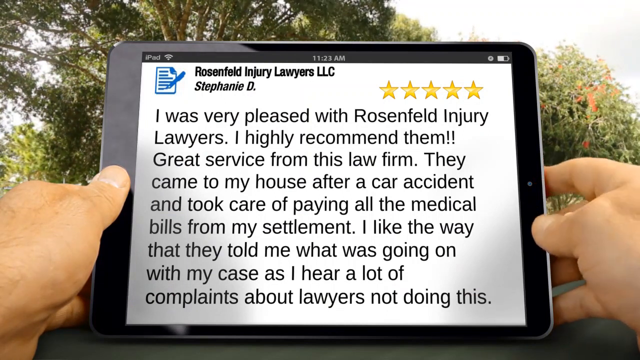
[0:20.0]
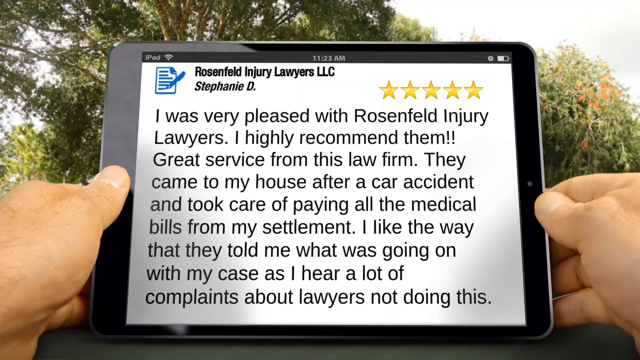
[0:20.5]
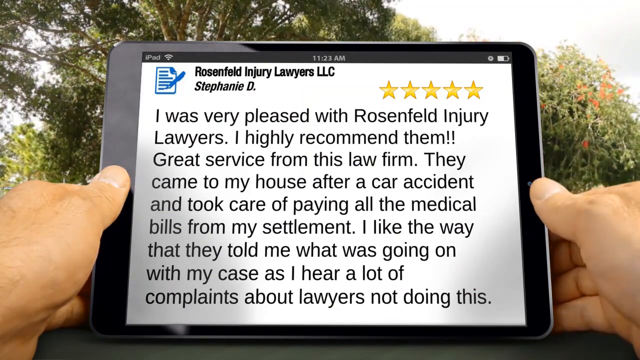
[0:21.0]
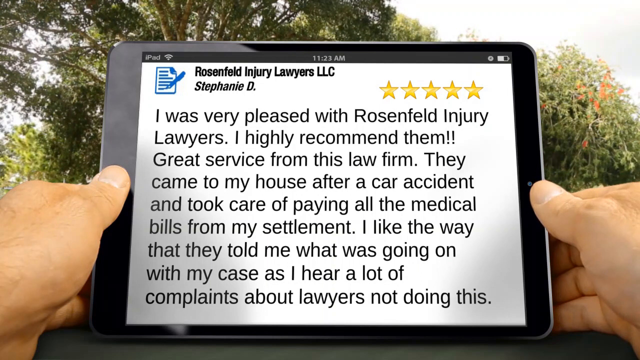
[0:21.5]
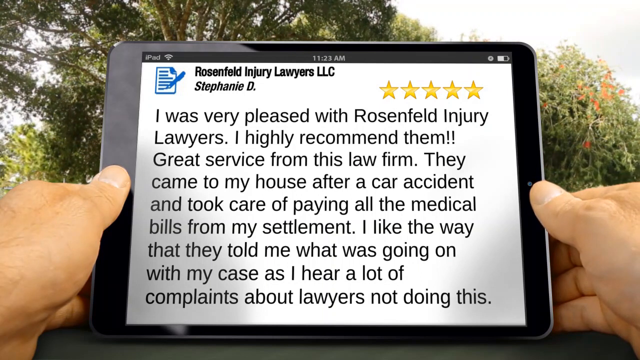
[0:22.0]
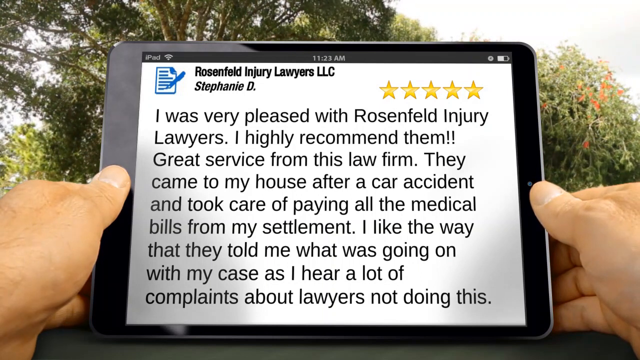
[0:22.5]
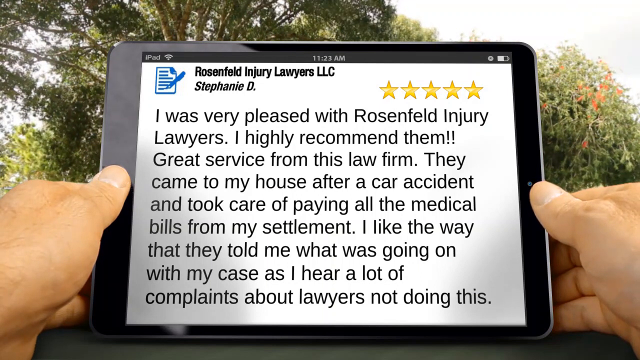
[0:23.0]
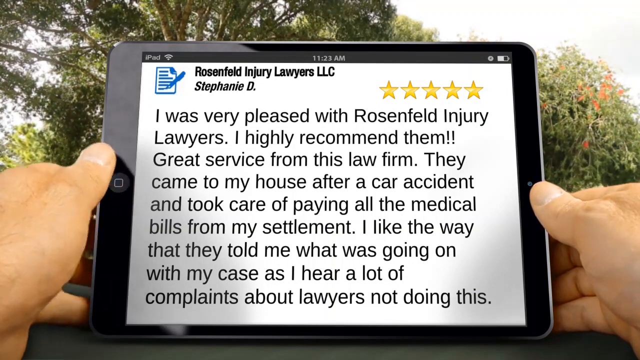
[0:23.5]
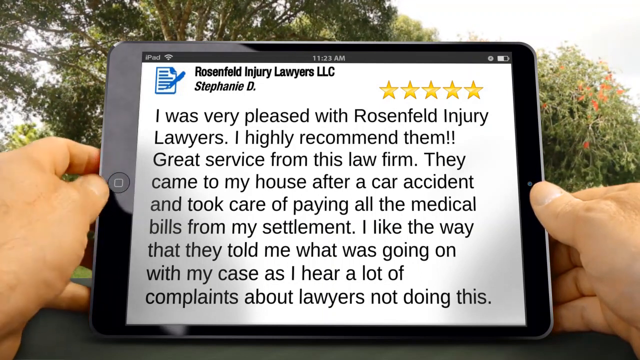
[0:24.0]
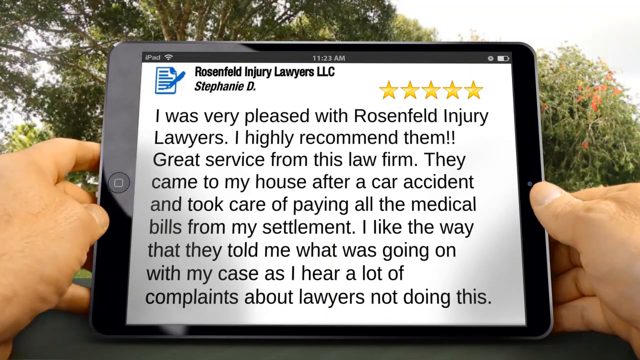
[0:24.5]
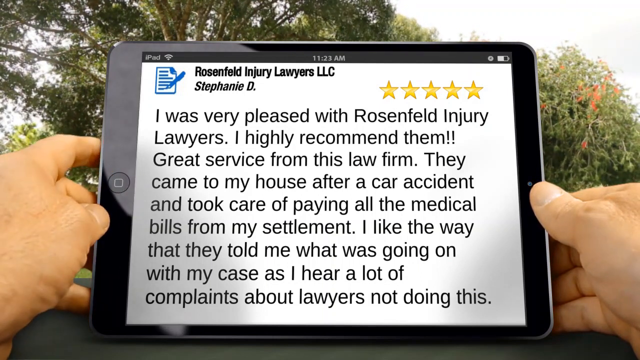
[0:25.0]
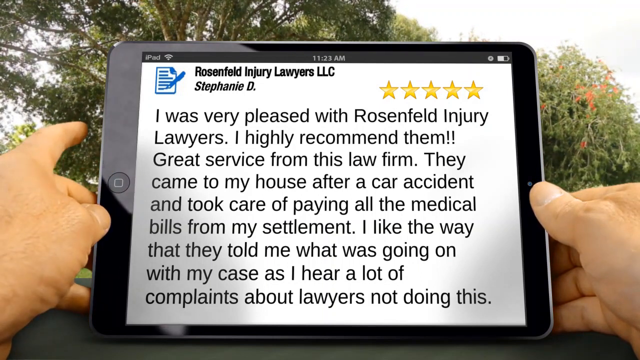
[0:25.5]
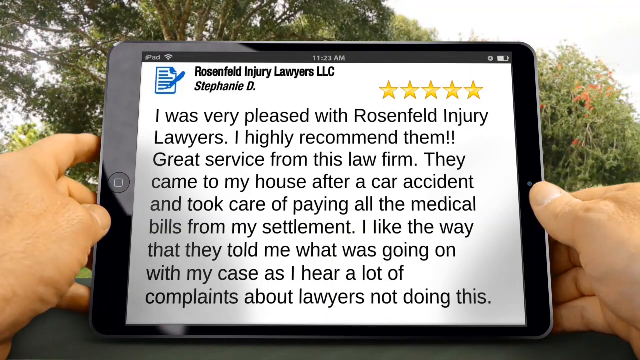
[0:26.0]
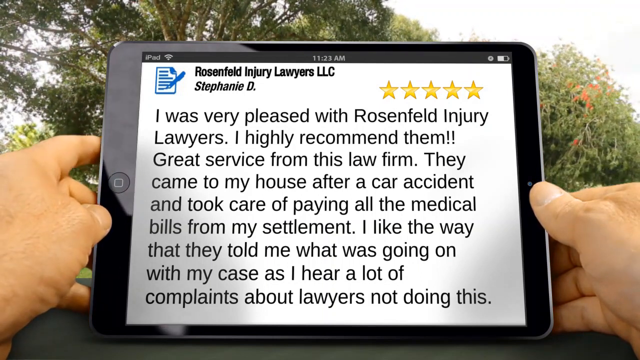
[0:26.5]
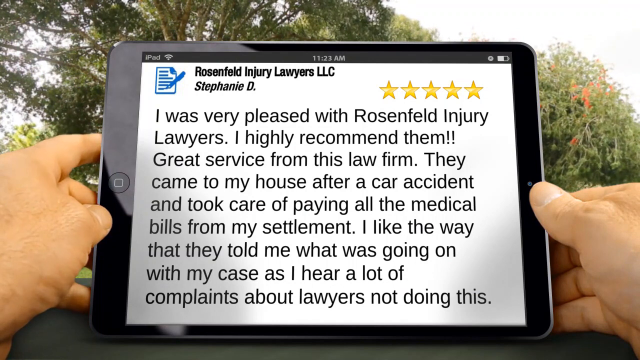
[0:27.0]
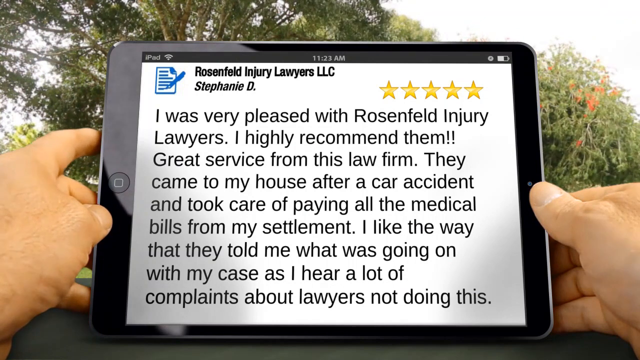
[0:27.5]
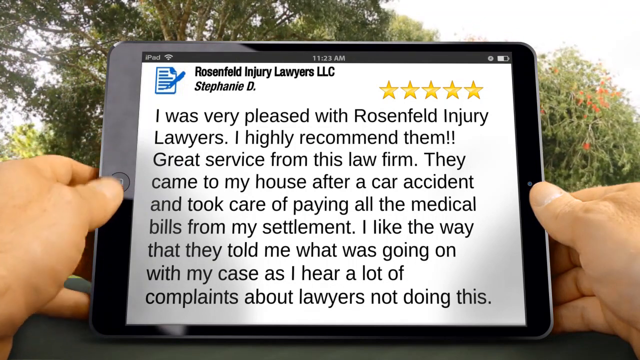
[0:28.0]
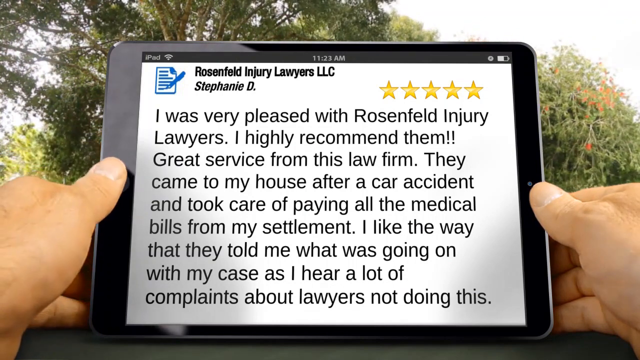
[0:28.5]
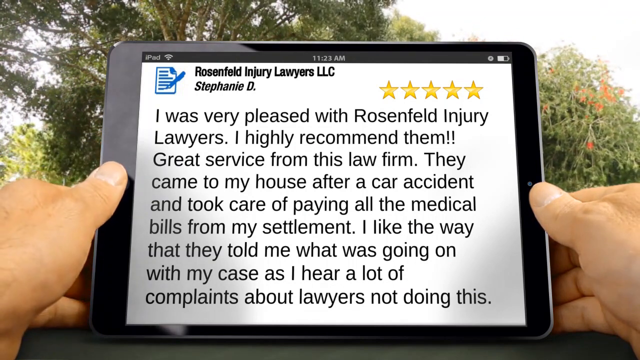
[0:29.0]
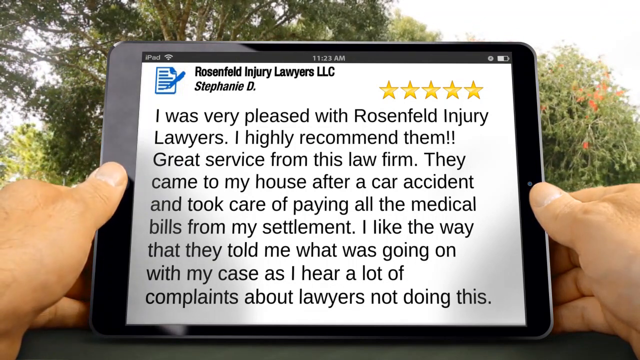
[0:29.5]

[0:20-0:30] A five-star review written by Stephanie about Rosenfeld Injury Lawyers LCC is displayed. Her message reads: "I was very pleased with Rosenfeld Injury Lawyers. I highly recommend them. Great service from this law firm. They came to my house after a car accident and took care of paying all the medical bills from my settlements. I like the way that they told me what was going on with my case as I hear a lot of complaints about lawyers not doing this, but my lawyers kept me updated about what's going on with my case." A tablet is held by two hands.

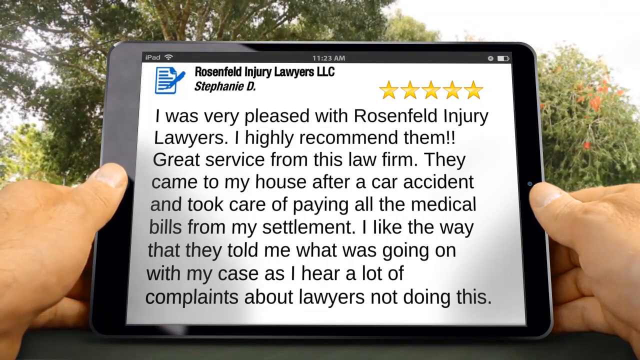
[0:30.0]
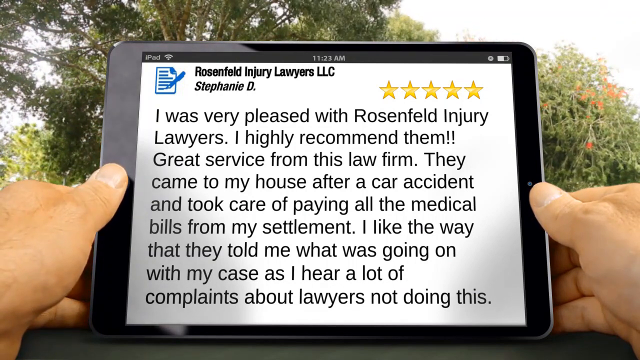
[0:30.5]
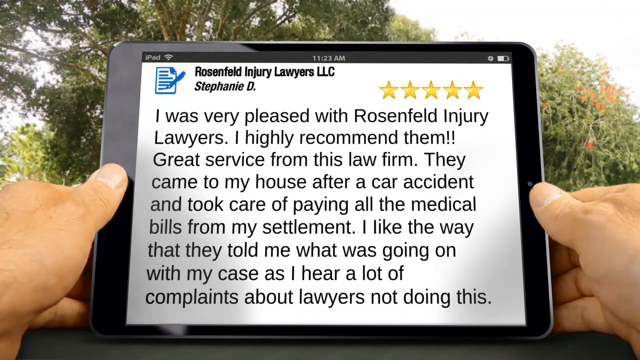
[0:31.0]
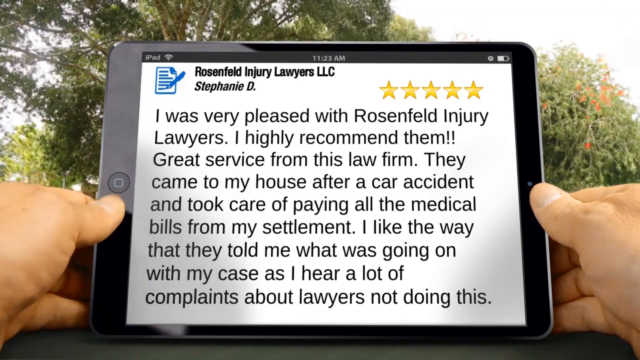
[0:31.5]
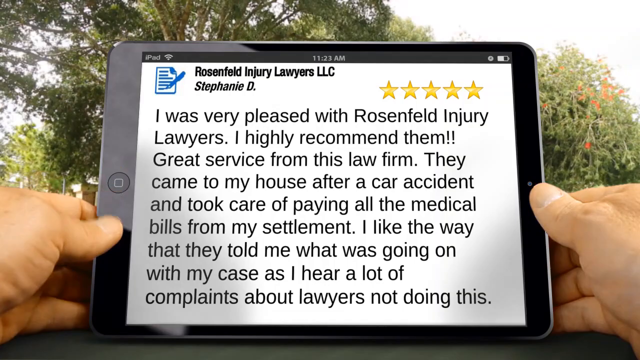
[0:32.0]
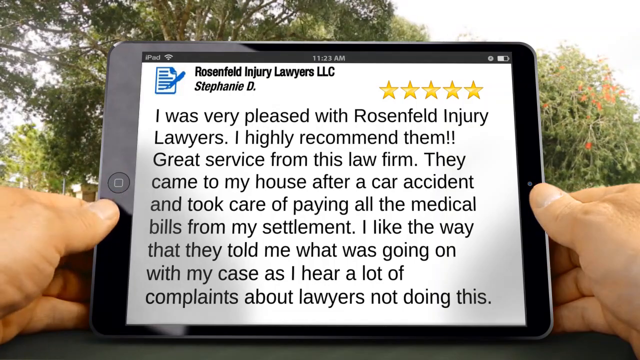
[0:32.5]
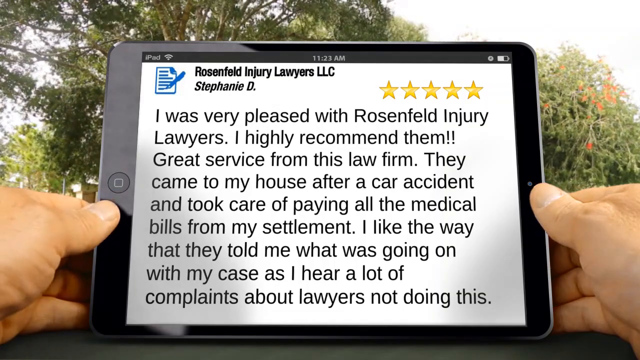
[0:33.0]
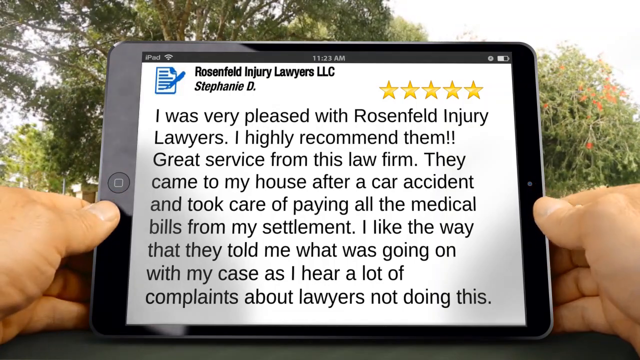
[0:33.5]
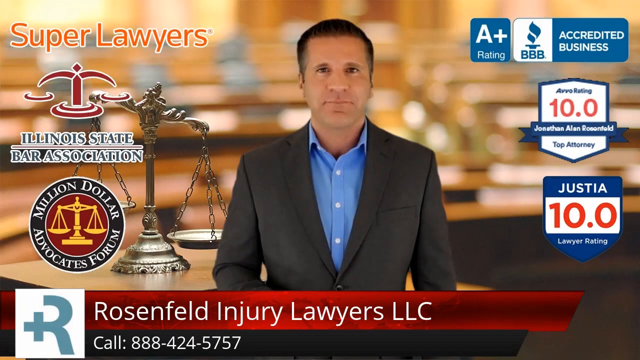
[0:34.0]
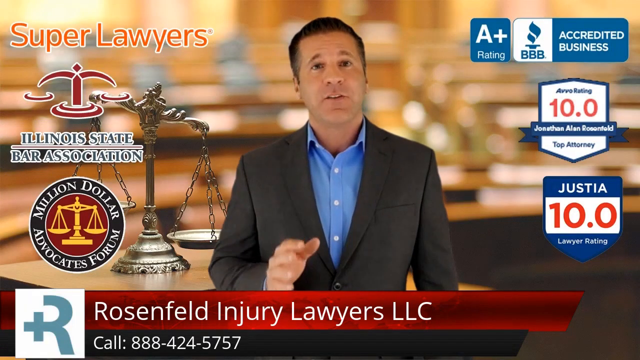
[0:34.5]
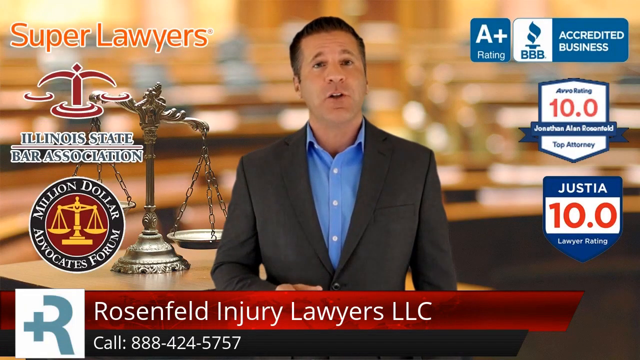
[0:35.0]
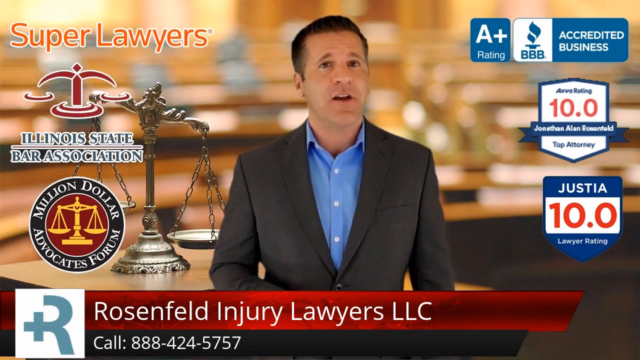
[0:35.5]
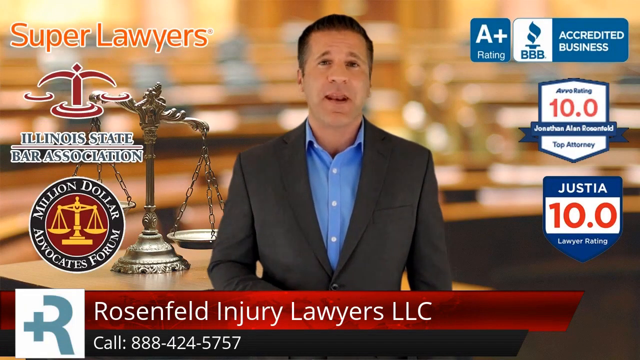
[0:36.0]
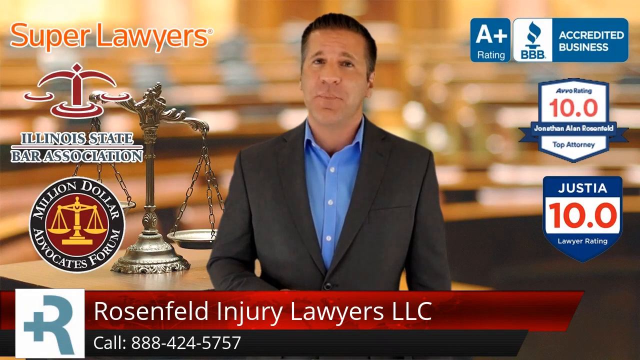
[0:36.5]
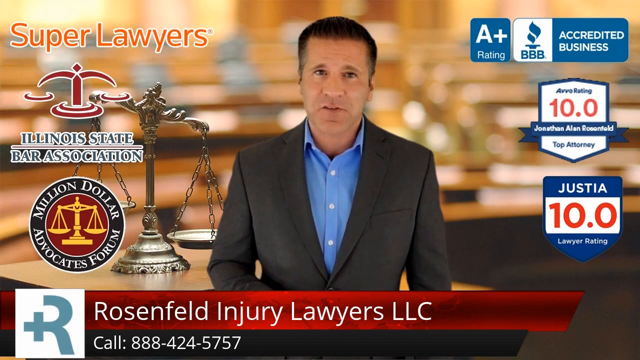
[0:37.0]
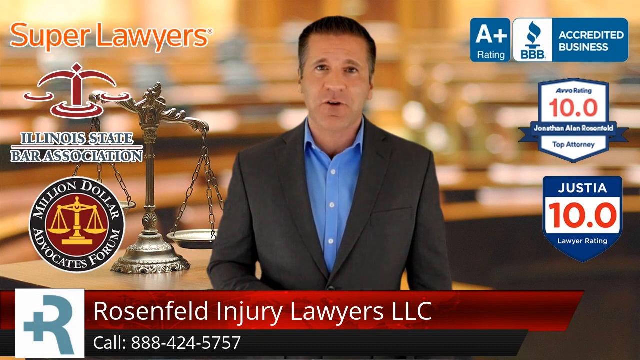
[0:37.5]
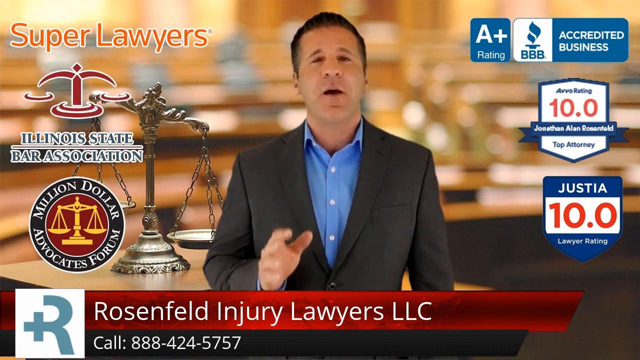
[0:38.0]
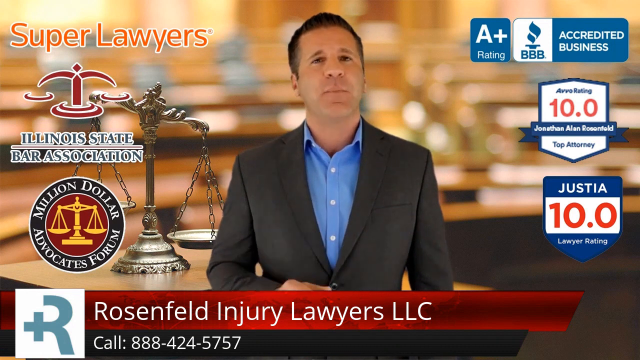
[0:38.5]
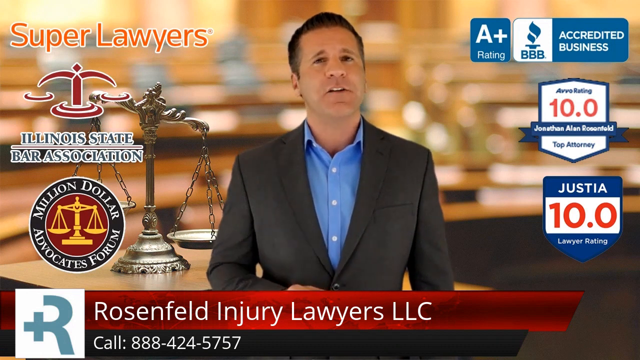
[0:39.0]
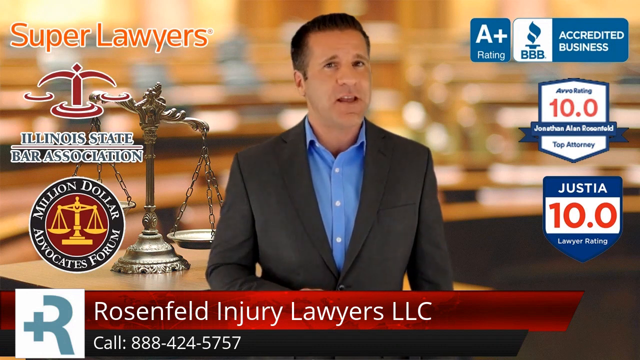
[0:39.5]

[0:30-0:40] Stephanie's review of Rosenfield Injury Lawyers appears again, praising the firm's service, the lawyers coming to her house after the accident, paying her medical bills from her settlement, and keeping her updated on her case. Then the Million Dollar Advocates Forum and super lawyers credentials appear, with 10.0 ratings and a Justia 10.0 lawyer rating, and contact details are shown at the bottom.